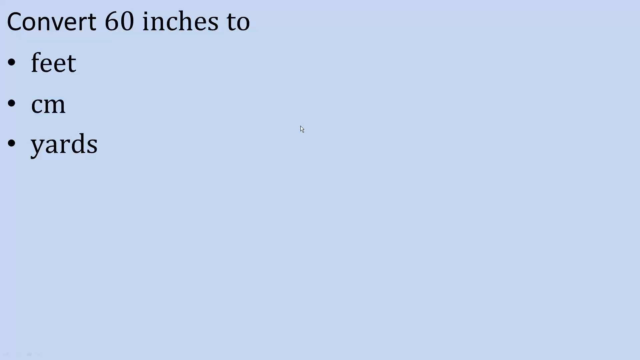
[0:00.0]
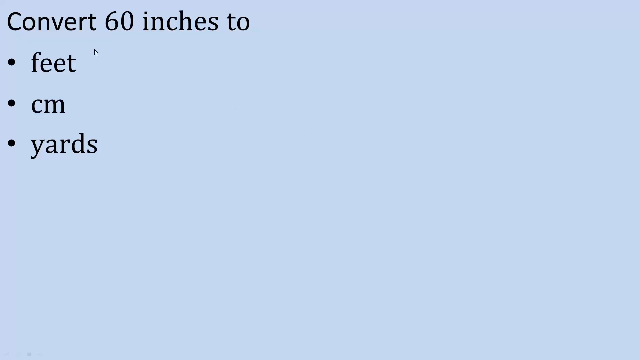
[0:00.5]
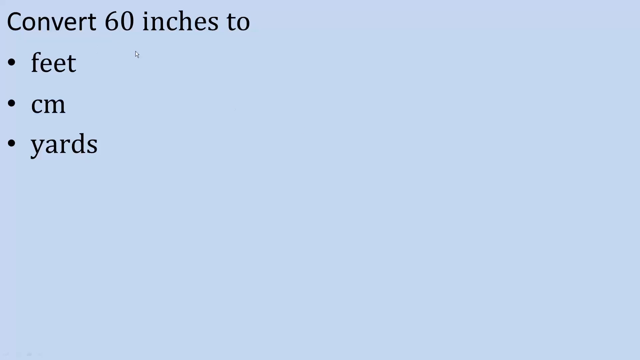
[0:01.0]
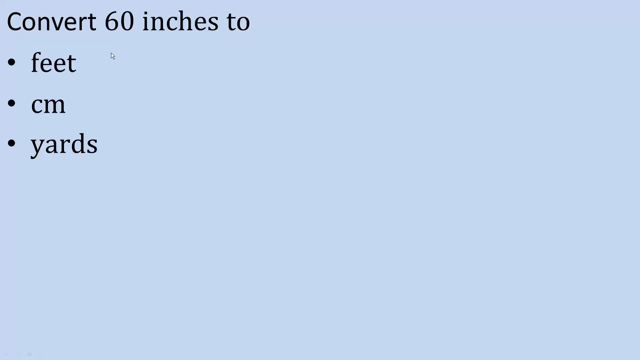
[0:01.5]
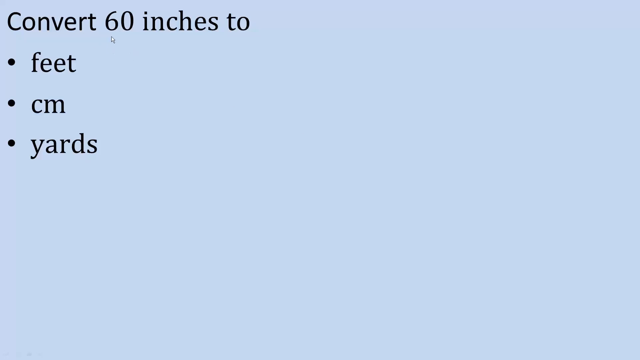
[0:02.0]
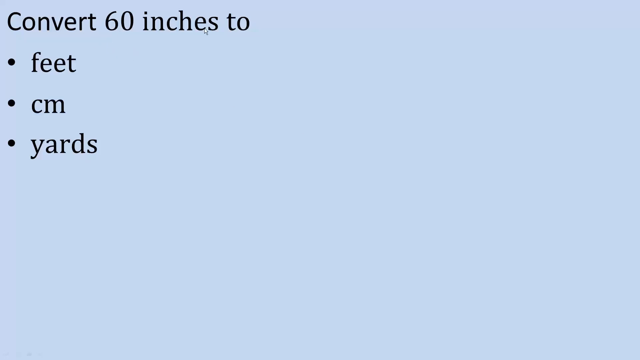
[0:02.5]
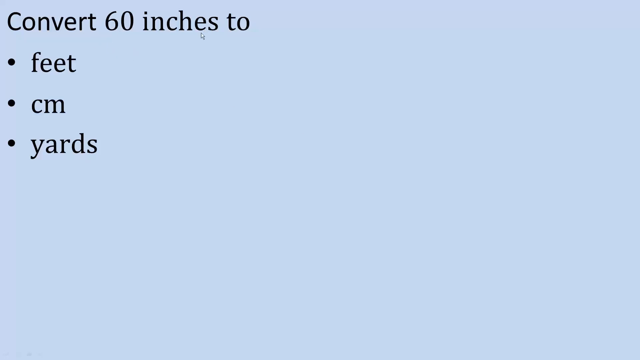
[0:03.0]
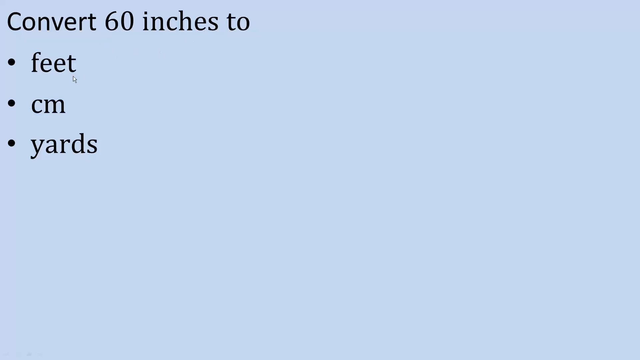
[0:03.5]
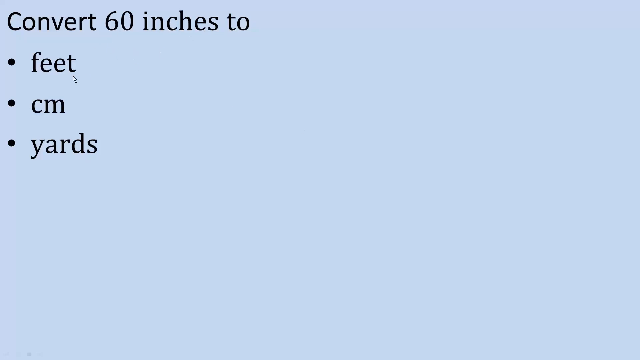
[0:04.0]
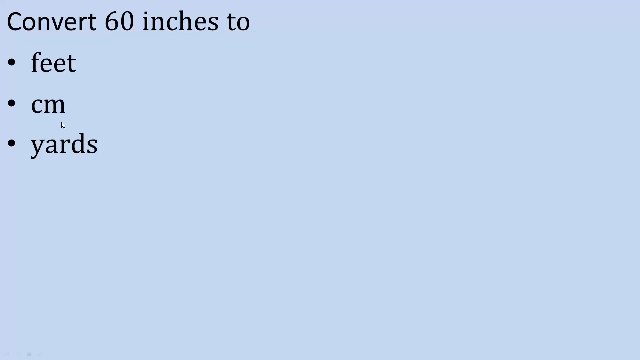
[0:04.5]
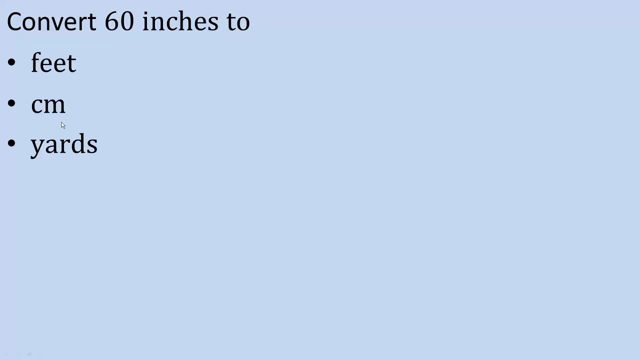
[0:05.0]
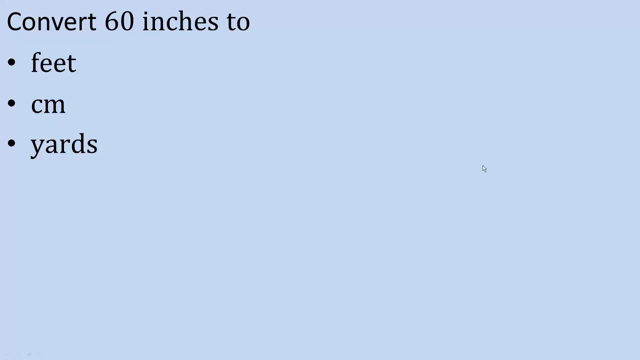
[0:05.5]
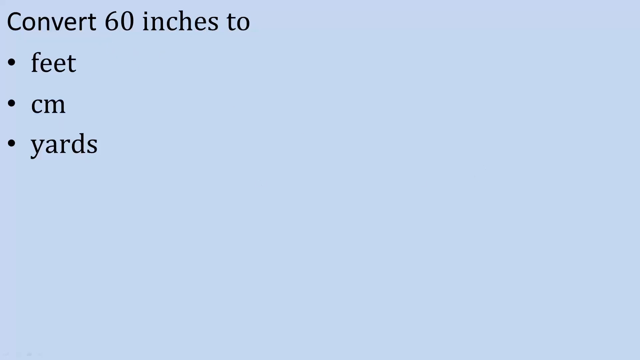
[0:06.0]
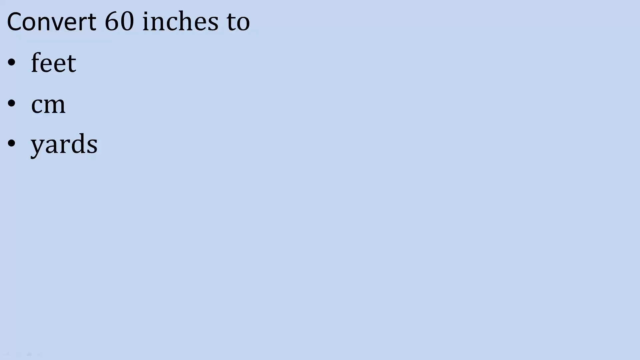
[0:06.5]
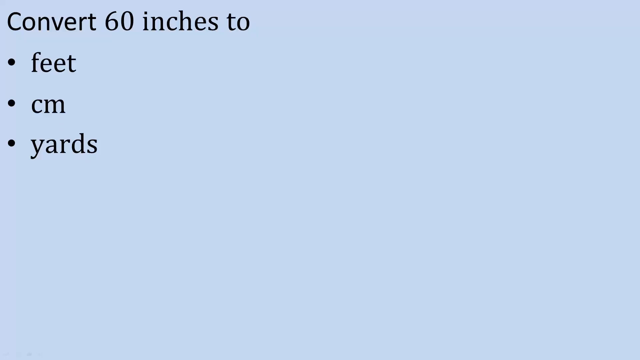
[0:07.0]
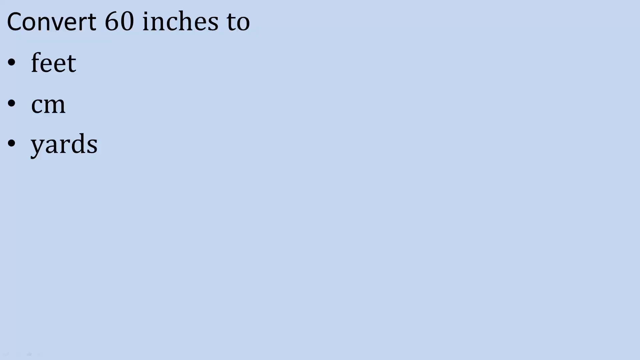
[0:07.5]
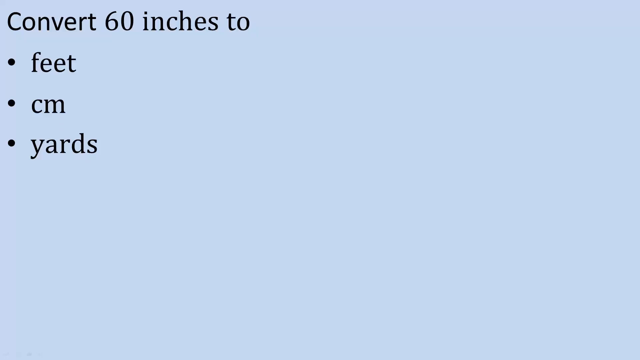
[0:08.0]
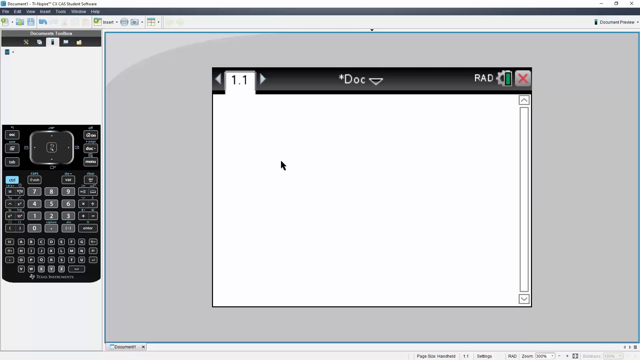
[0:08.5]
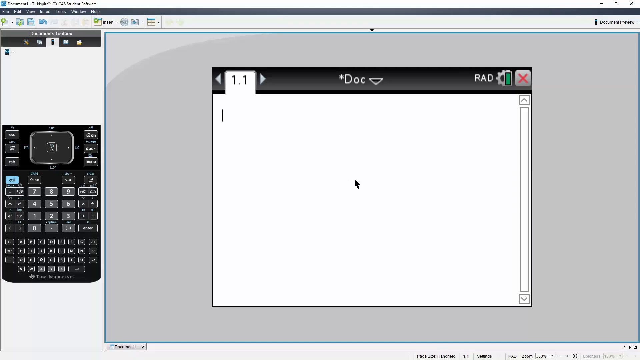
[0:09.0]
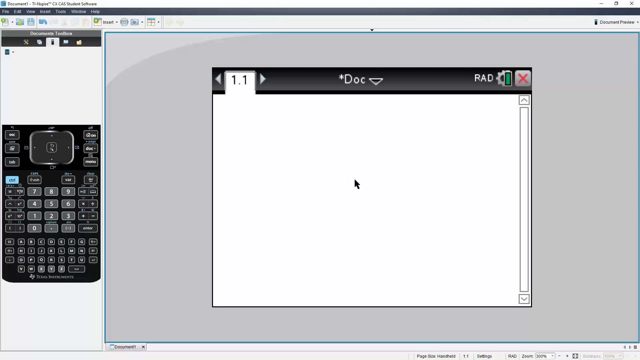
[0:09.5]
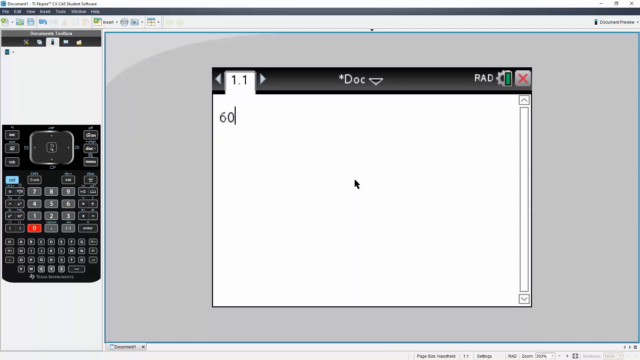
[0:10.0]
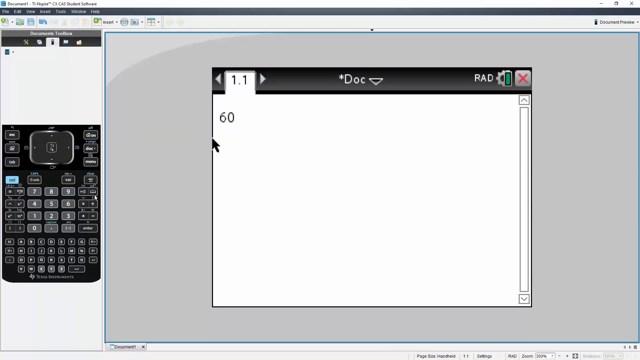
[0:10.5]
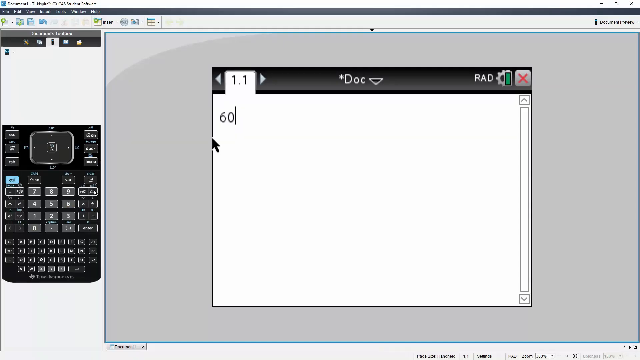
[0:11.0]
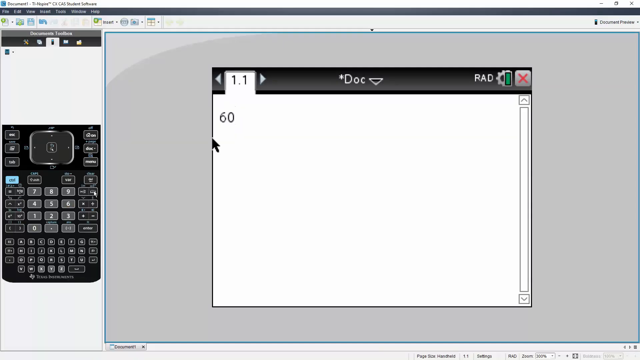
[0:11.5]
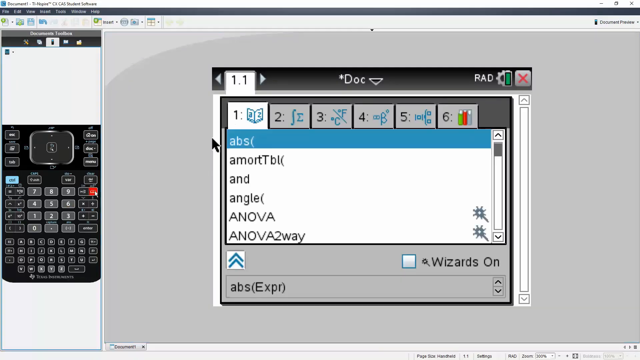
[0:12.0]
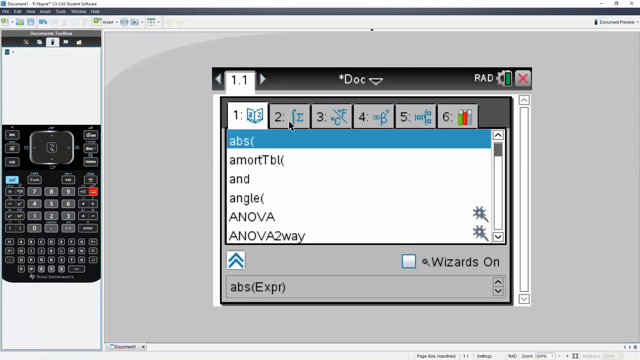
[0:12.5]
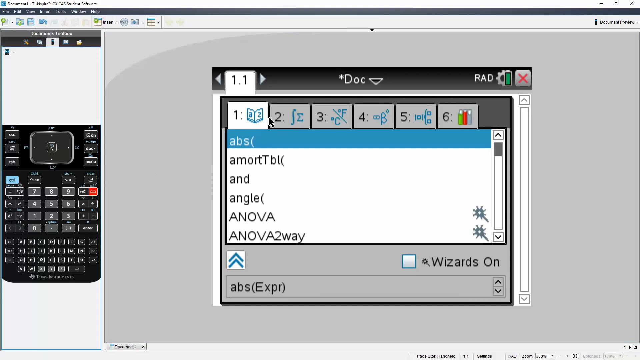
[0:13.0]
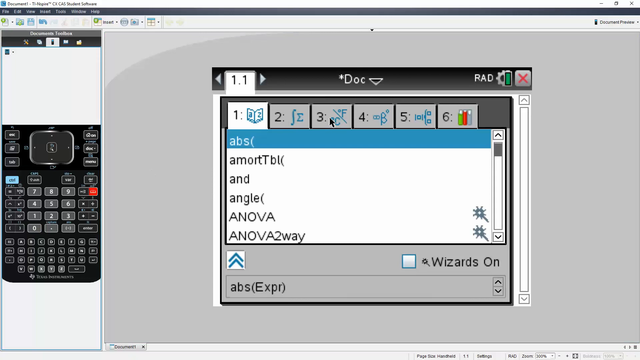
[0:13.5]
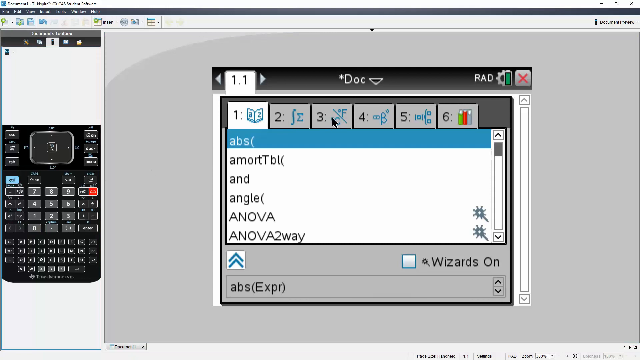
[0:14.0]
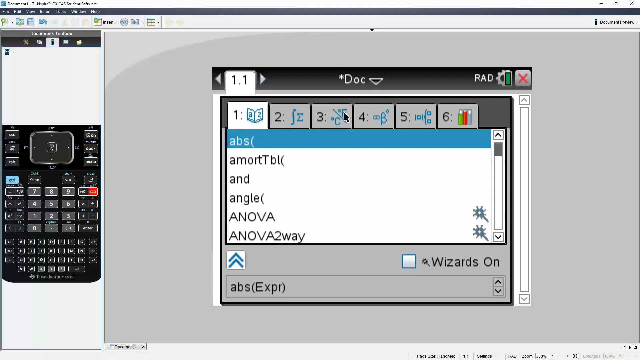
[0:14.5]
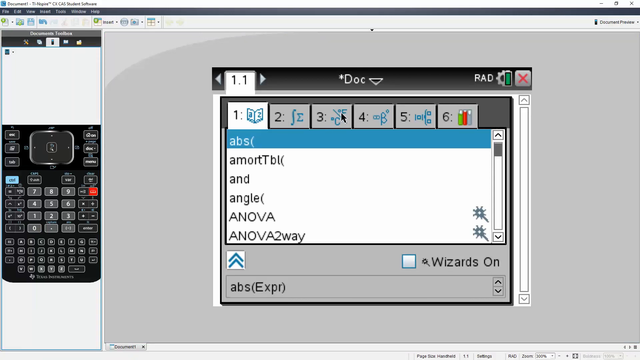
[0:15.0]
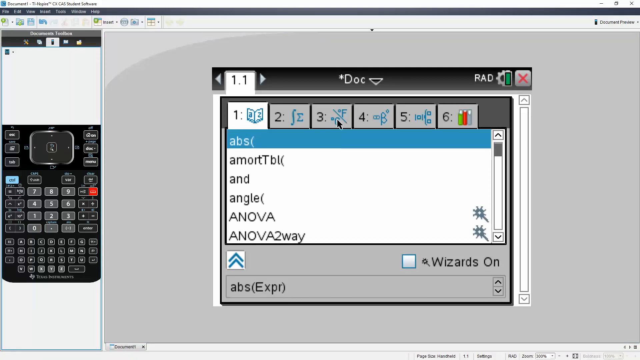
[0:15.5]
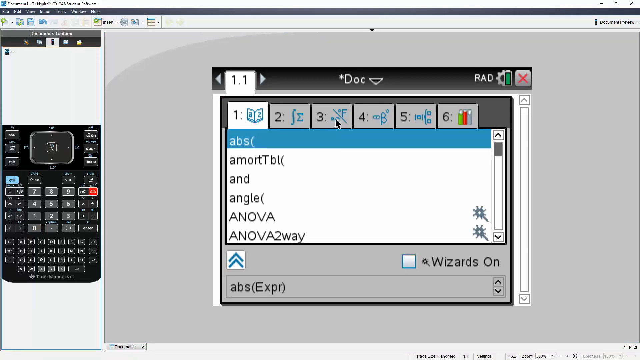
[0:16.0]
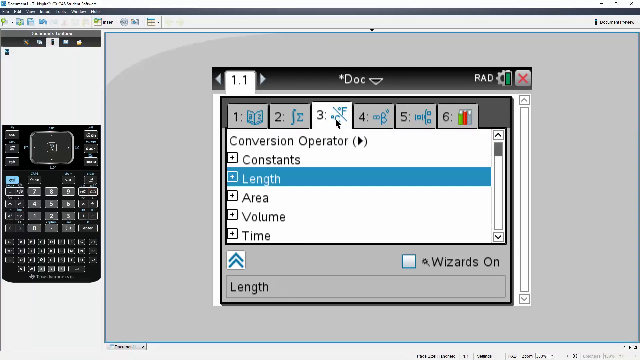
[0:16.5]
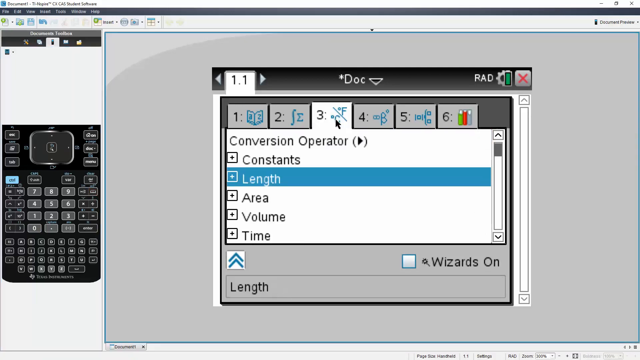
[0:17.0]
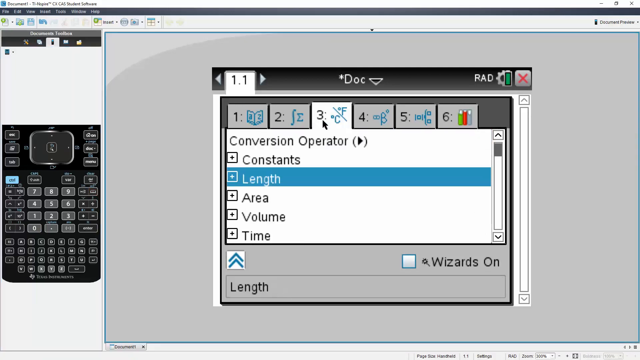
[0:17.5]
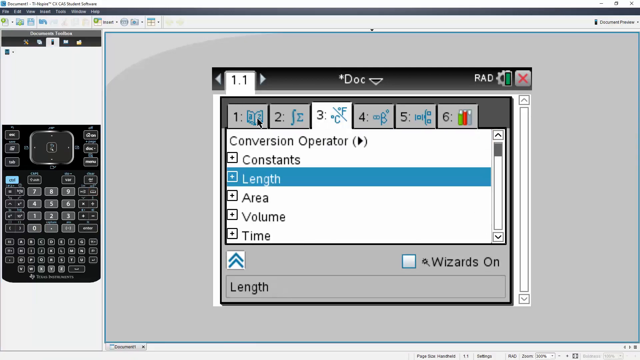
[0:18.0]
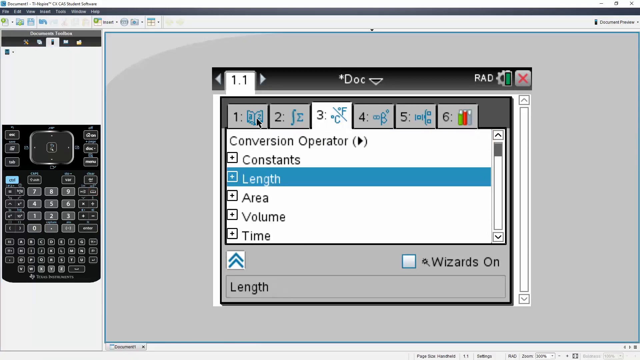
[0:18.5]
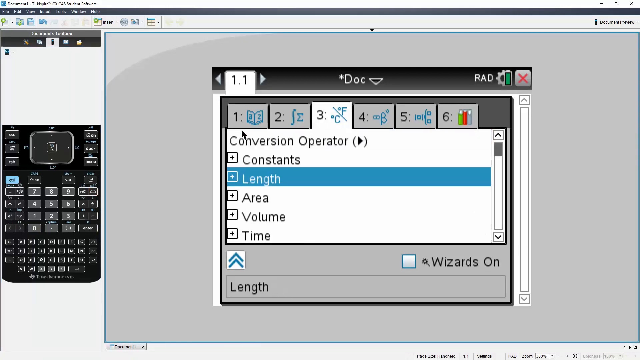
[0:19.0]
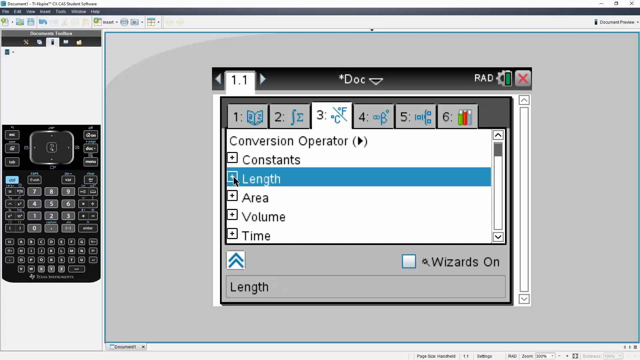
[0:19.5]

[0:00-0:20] The video opens on a light blue background. In the top left corner, in black, it says "convert 60 inches to", with three bullet points under it: the first says "feet", the second "centimeters", and the third "yards". The cursor comes in and kind of moves around all of these, pointing them out. The video then cuts to a background that looks like a document section; the text at the top is too blurry to make out. A little calculator, kind of, is on the left side, taking up about a quarter of the screen. In the center of the rest of the screen is a pop-up that says "dock" in the center with an arrow pointing down. On its left side it says "1.1", with arrows to the left and right of it. On the right side it says "rad", followed by a settings icon, a battery icon and an X out icon. The cursor goes to the dock and types in 60, then pushes a button on the calculator, which pulls up another screen underneath the dock. It clicks on the third option, then goes down and clicks the length button, which has a blue highlight around it.